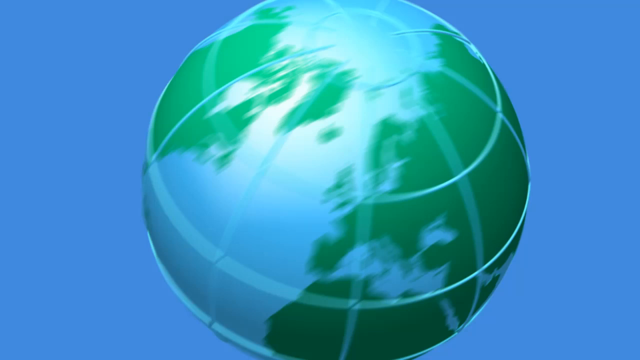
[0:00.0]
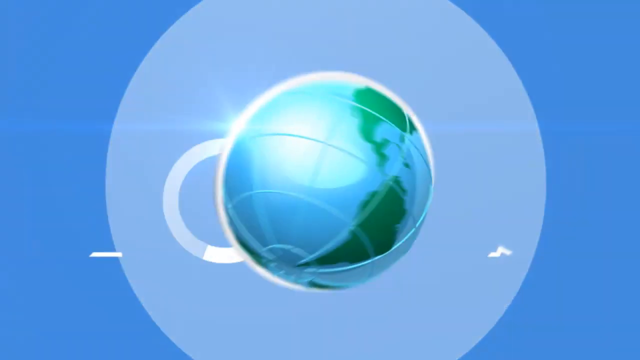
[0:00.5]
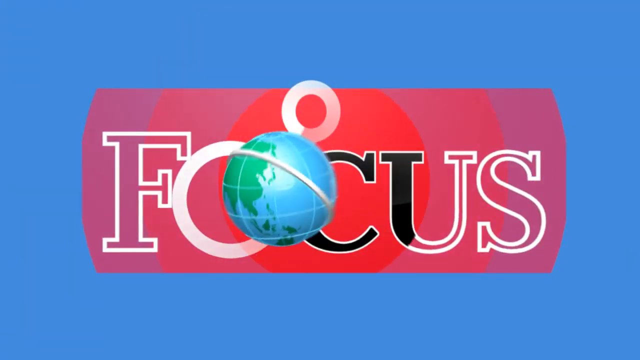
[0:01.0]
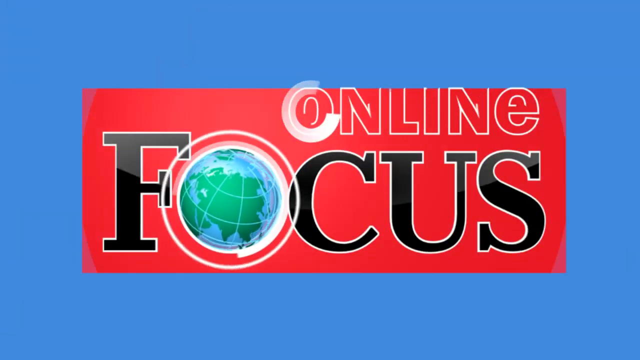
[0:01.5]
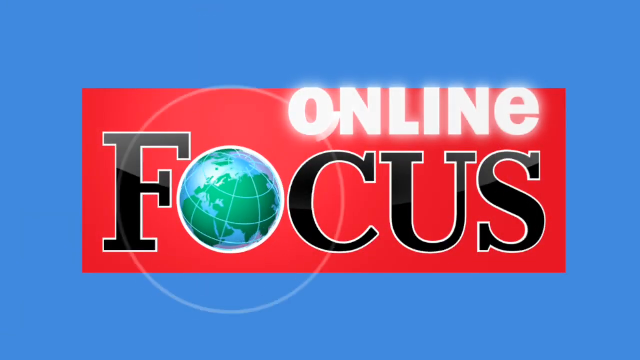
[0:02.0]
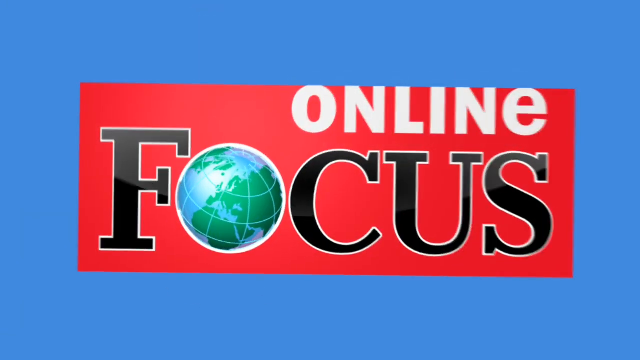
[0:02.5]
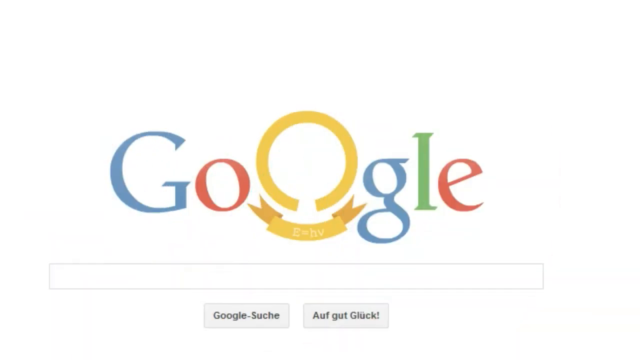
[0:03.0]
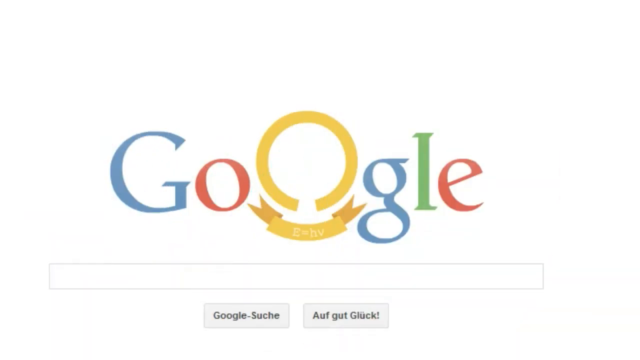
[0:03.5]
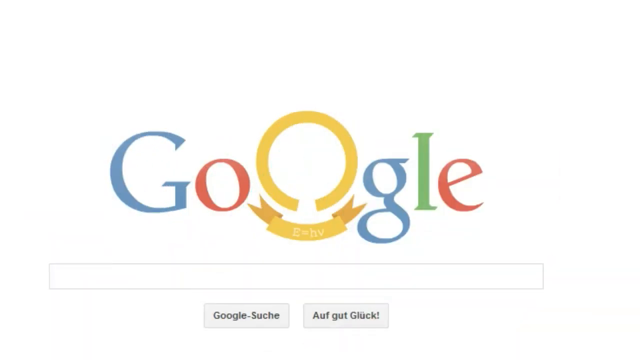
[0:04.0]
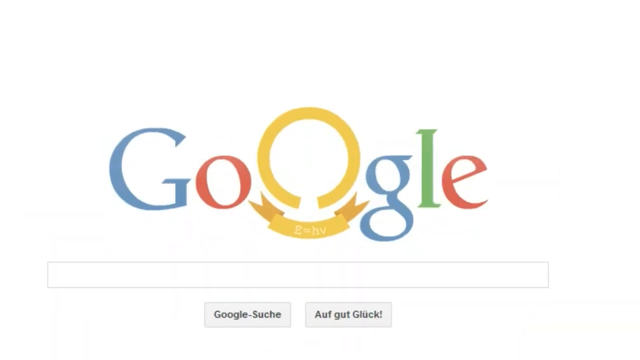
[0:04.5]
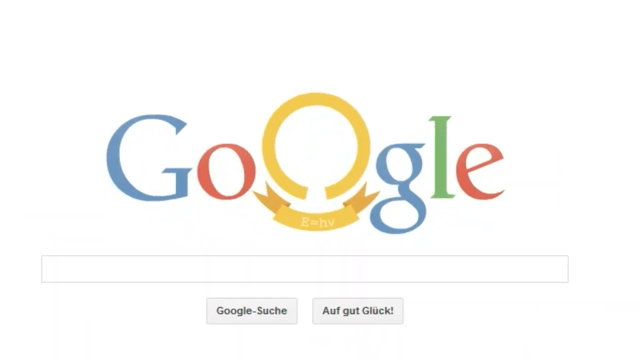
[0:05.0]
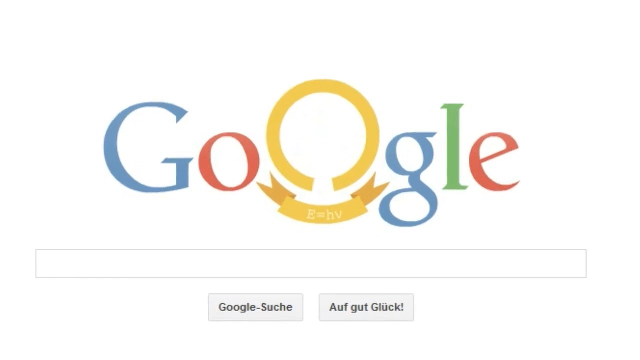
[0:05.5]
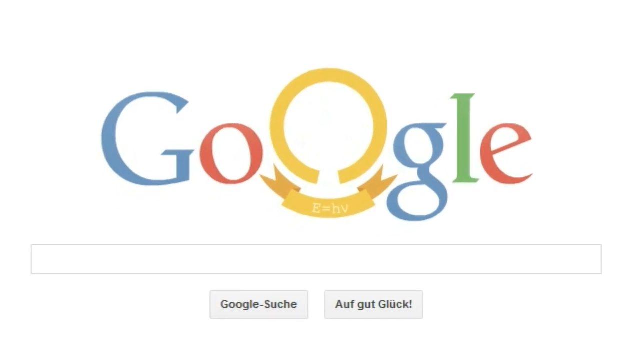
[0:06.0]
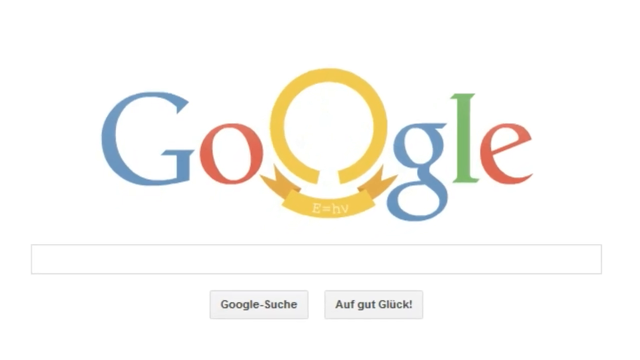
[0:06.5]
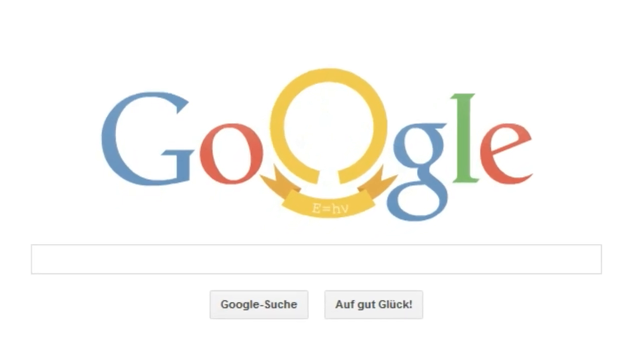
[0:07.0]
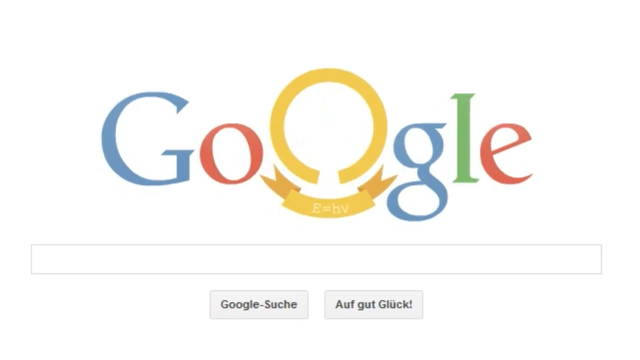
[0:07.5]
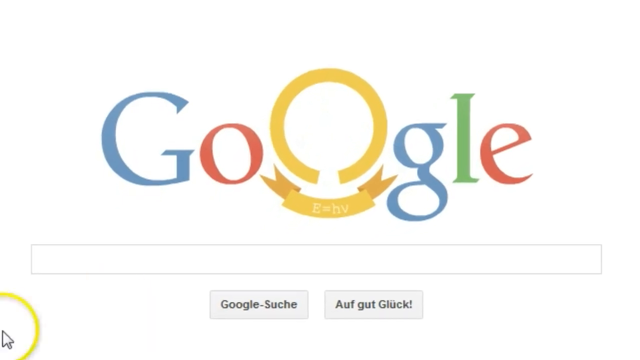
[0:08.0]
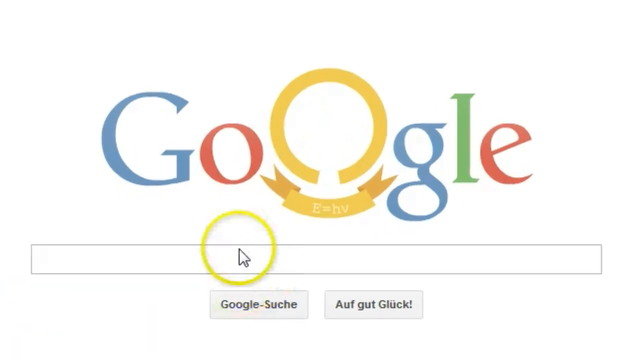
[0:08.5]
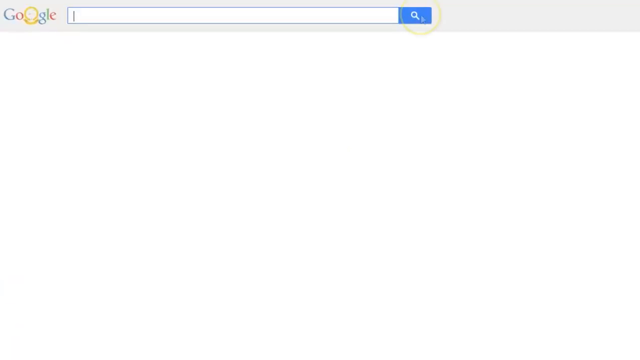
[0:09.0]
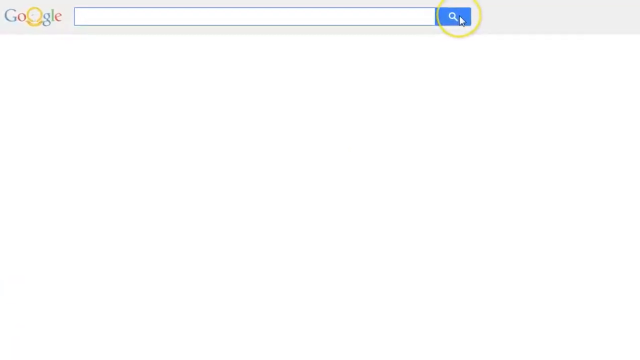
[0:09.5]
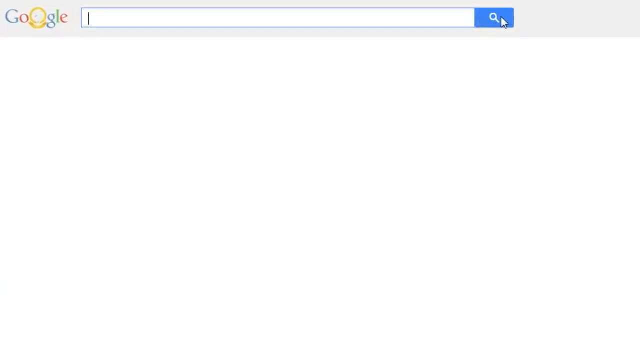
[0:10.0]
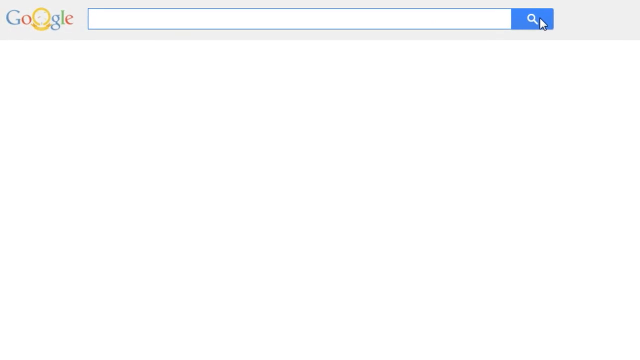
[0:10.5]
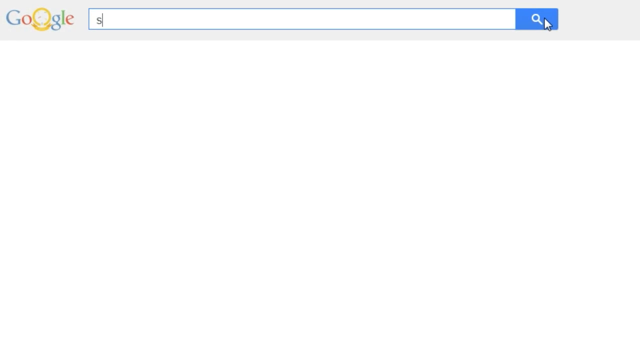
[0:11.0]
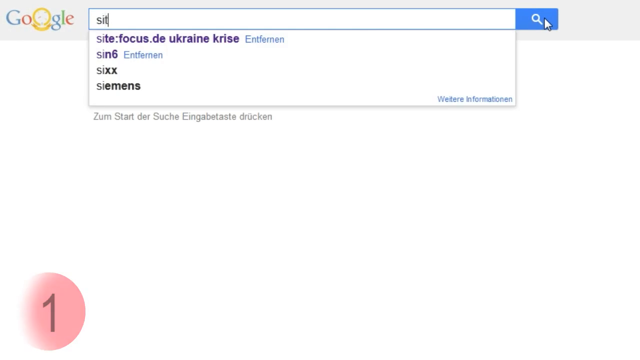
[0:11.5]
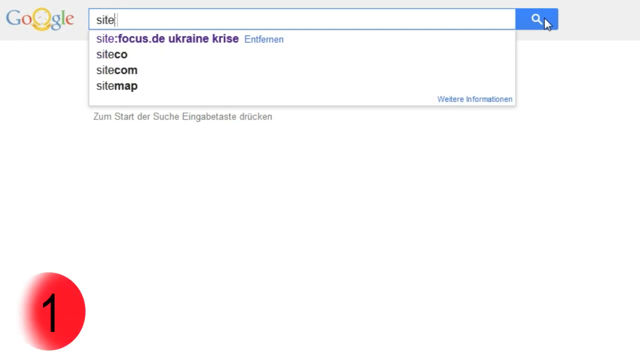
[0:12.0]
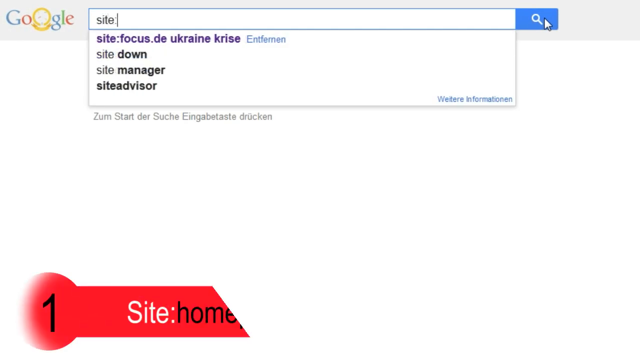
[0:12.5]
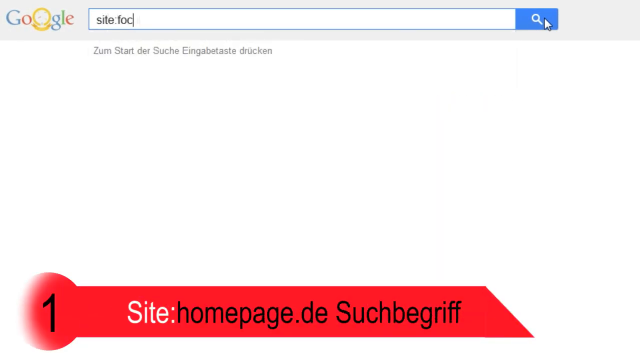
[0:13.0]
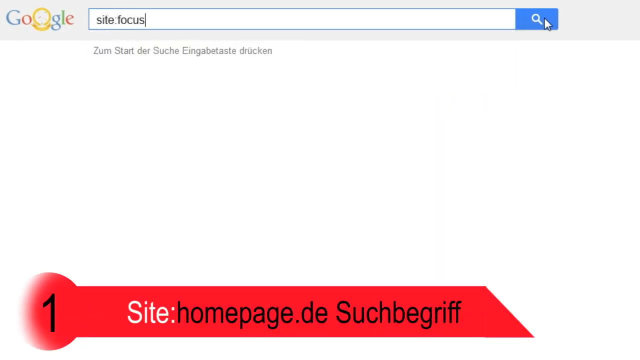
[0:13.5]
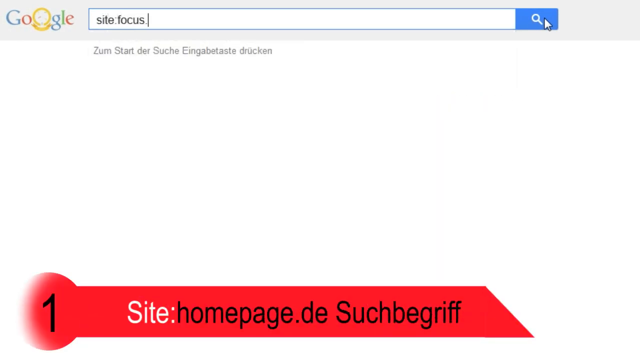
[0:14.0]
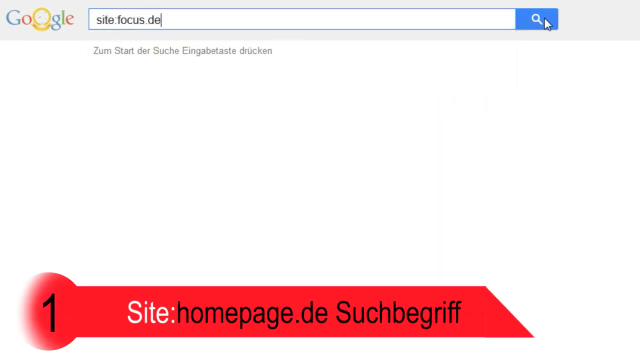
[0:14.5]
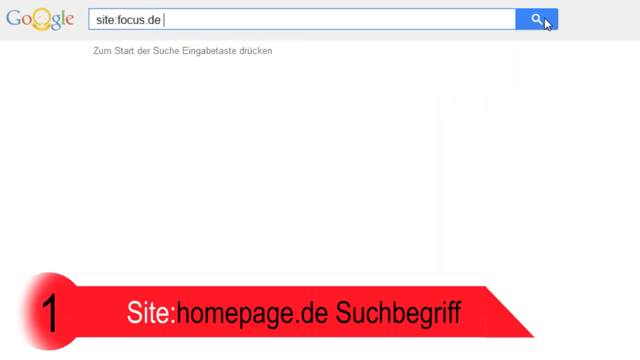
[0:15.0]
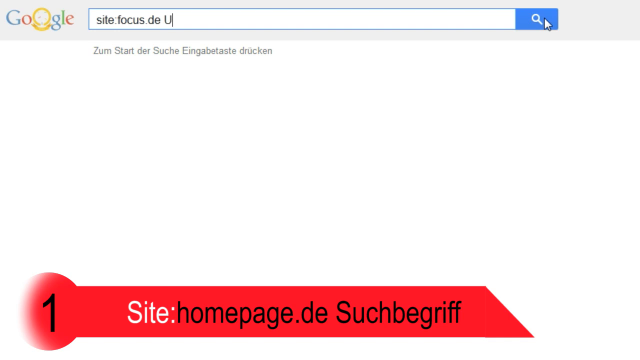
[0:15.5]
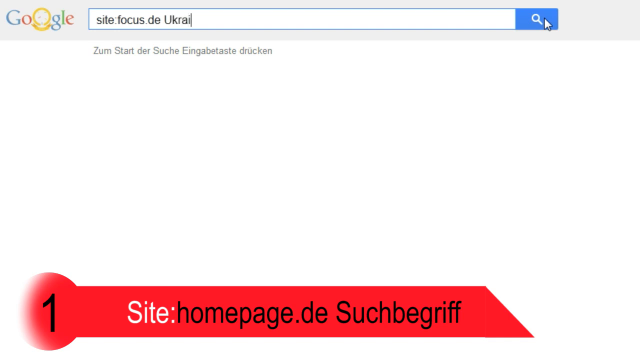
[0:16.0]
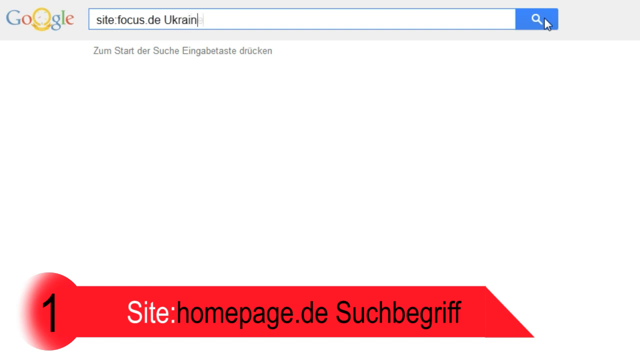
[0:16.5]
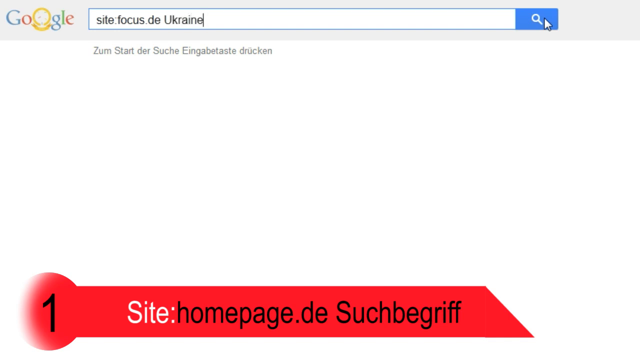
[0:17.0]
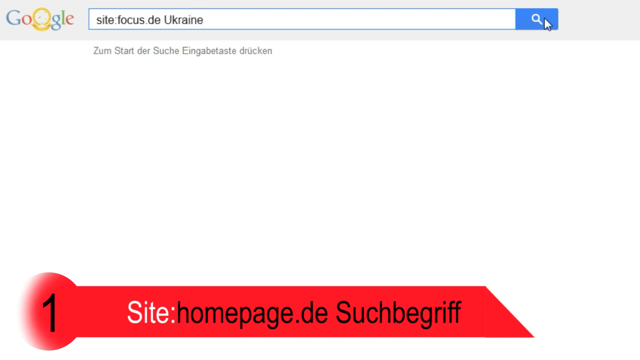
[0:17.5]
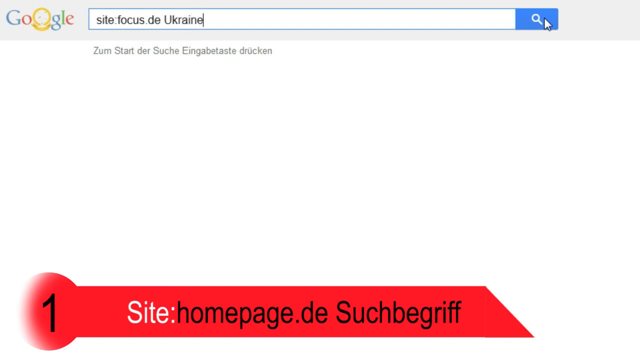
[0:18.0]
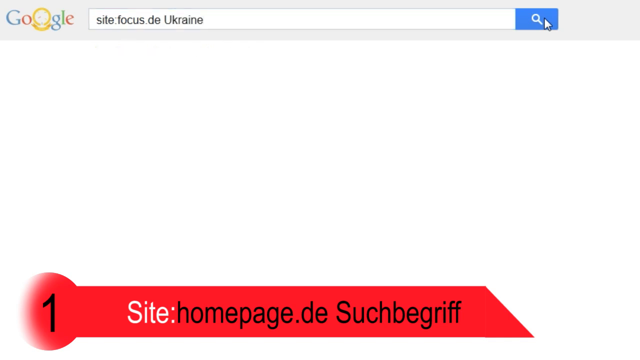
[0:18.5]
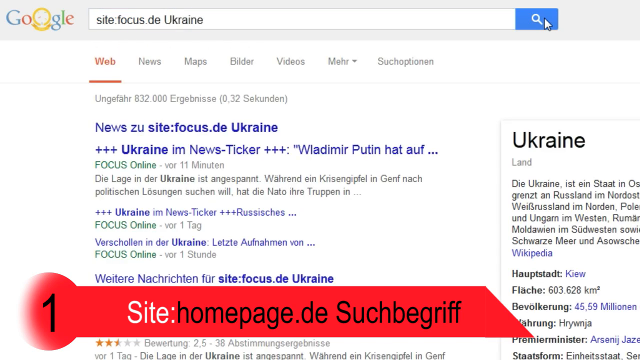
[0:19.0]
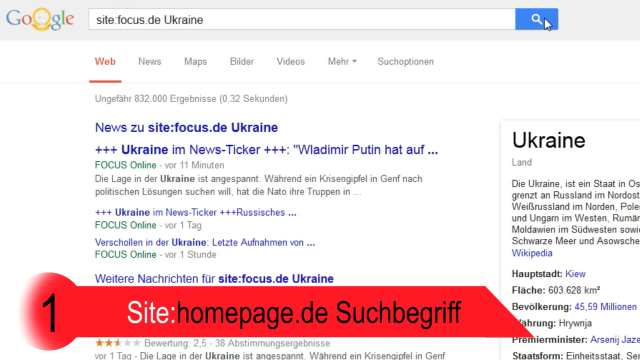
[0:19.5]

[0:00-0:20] An online tutorial opens with a logo: the planet Earth spins around and then becomes part of the logo, taking the place of the O. The name of the website appears as "Online Focus", with the text in white and black on top of a red rectangle, which is on top of a blue background. The Google homepage then appears in another language, apparently German. The screen zooms in on the search bar and the Google logo, then switches to the search bar, where "site:focus.de Ukraine" is typed in. The search magnifying glass is pressed and some websites appear. In the Google logo, the second O is golden and larger than the rest of the letters, and below it is a gold ribbon that says "E=HV".